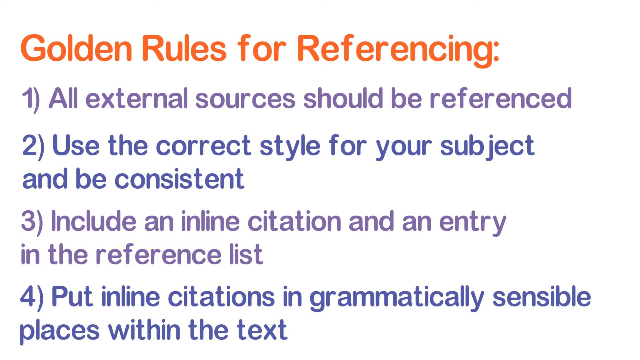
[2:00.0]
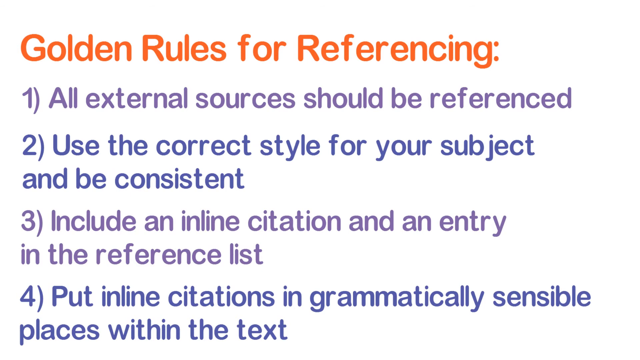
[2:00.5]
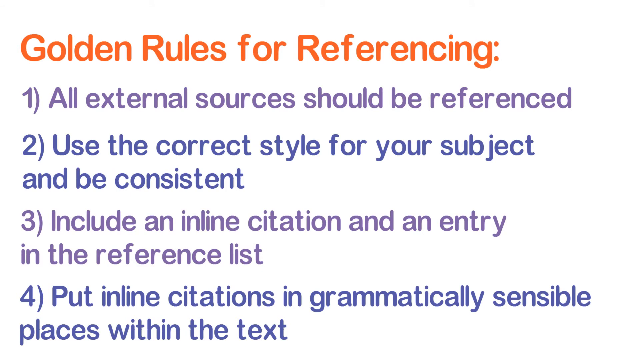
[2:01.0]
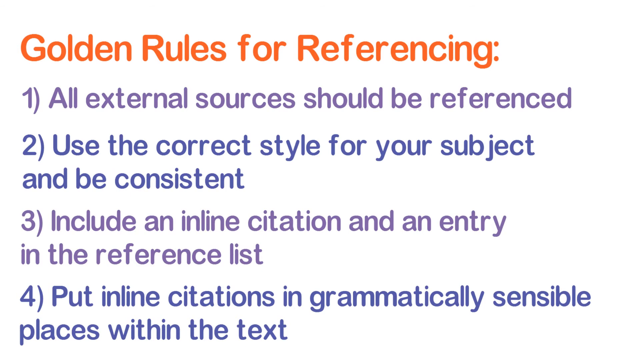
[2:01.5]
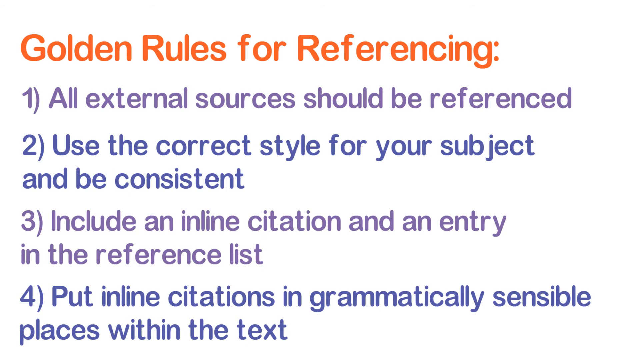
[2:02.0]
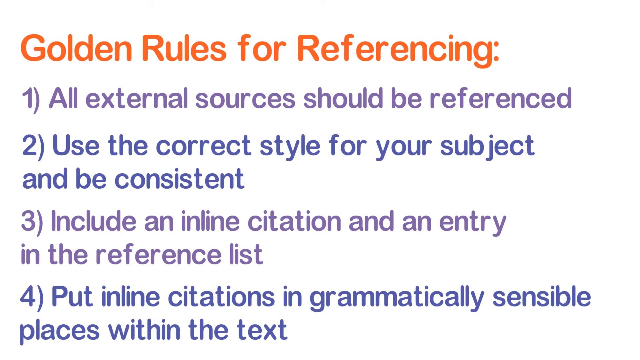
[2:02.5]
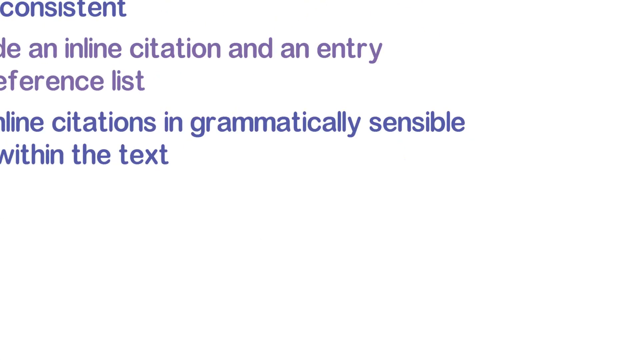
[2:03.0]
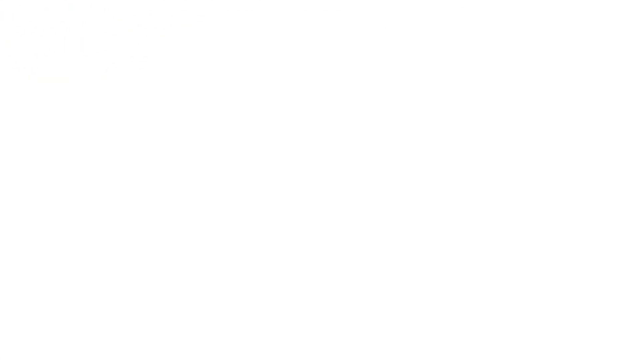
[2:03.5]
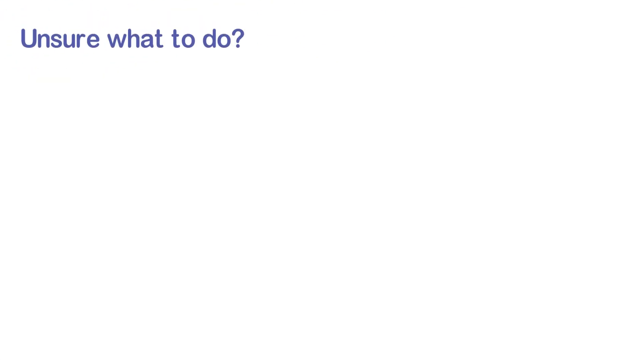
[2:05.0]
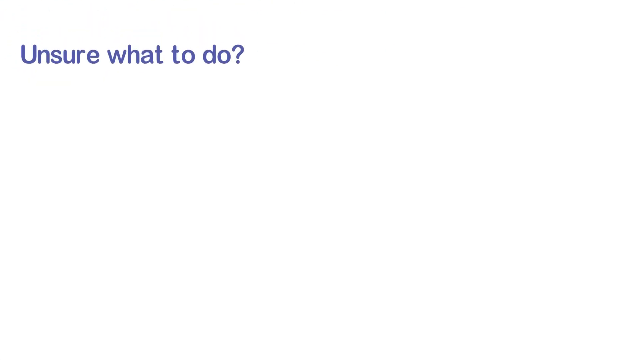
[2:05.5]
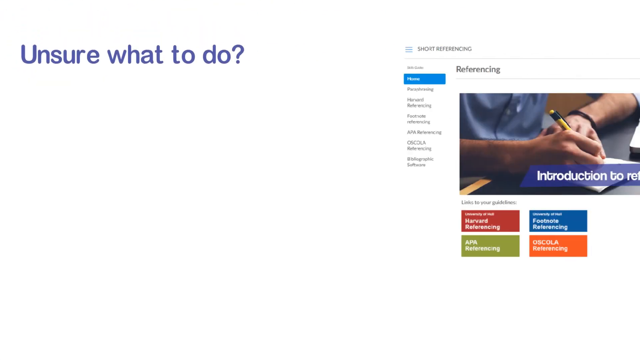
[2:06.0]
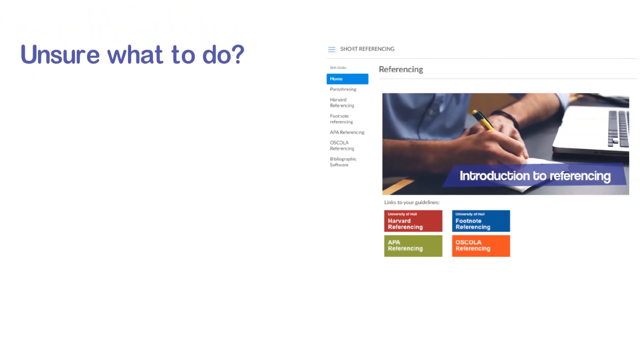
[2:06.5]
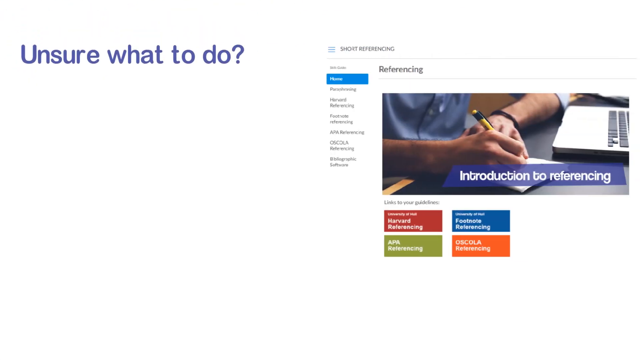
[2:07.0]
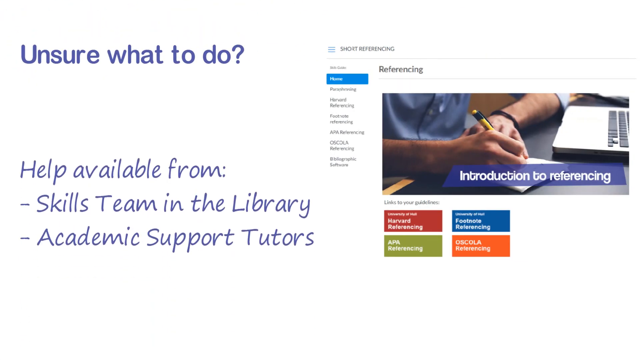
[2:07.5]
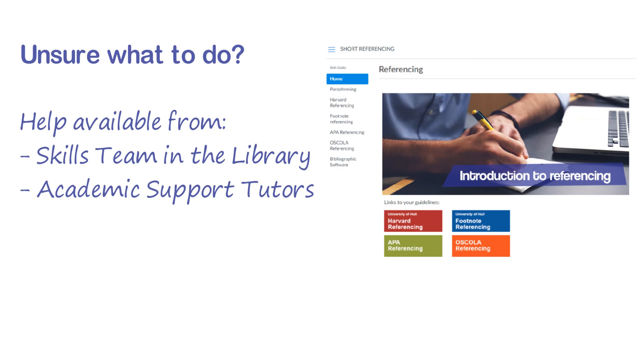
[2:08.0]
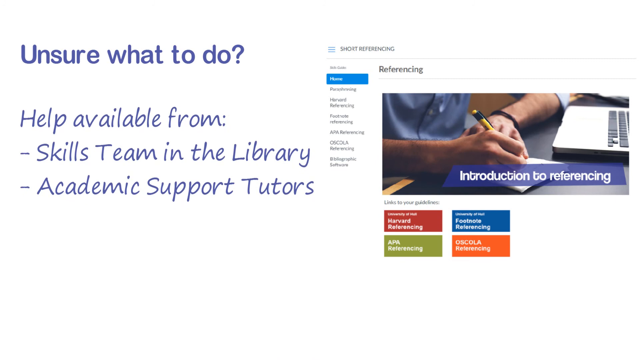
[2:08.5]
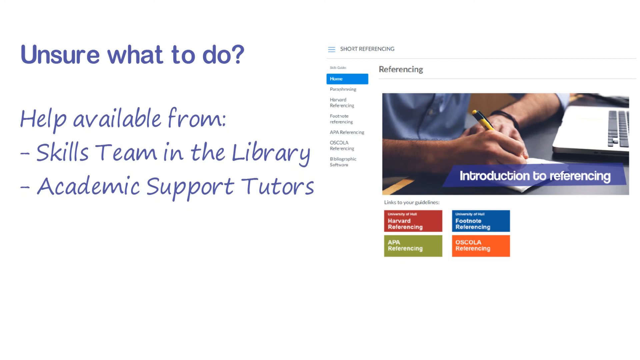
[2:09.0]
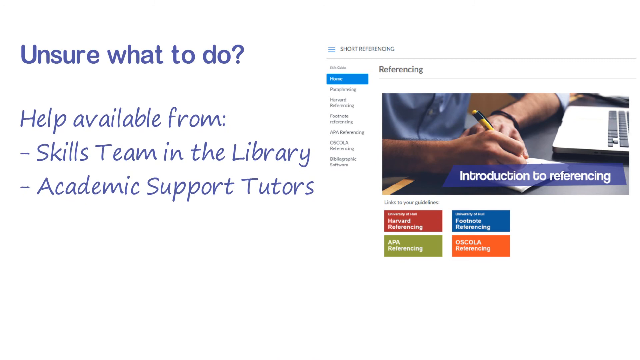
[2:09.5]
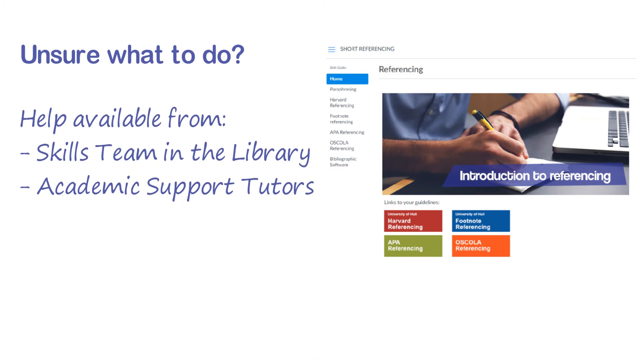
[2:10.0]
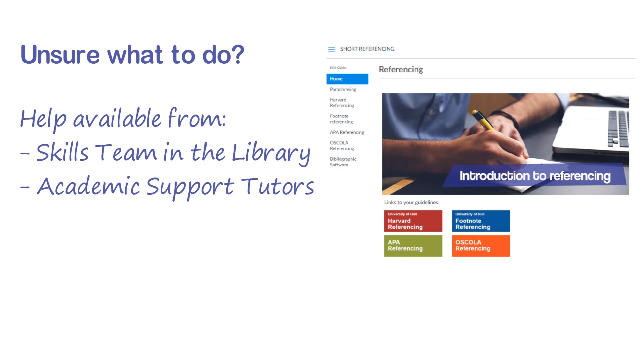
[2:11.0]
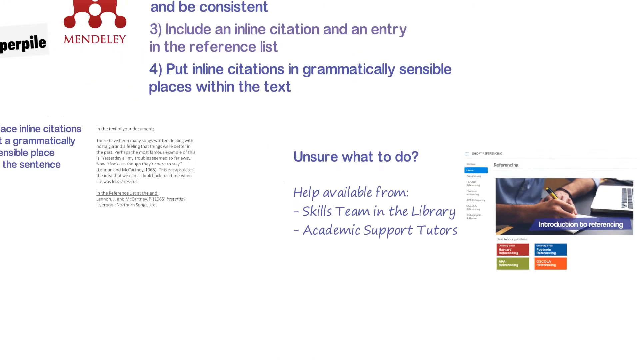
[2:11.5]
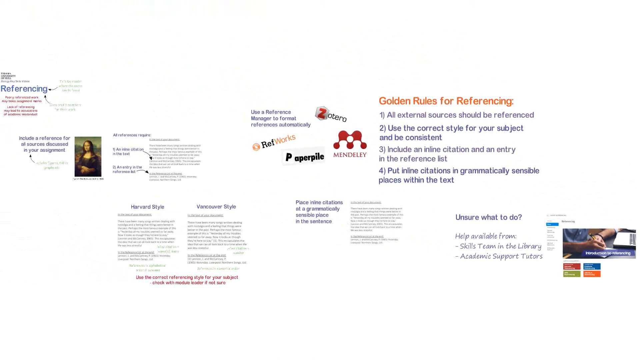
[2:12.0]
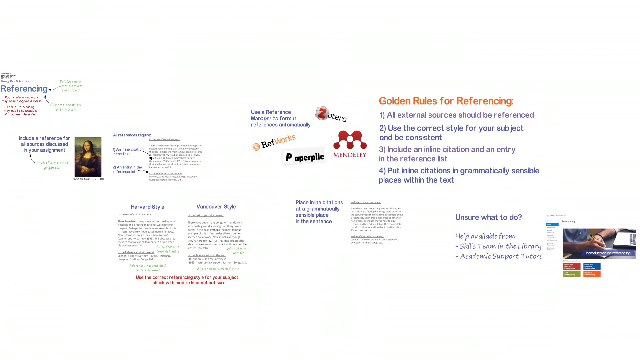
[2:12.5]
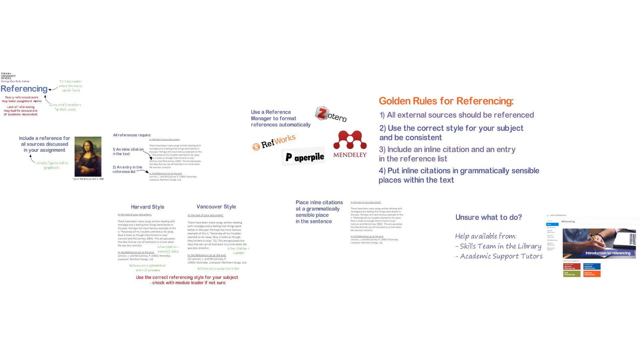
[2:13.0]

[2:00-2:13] The screen is white. At the top, in orange, is "Golden rules for referencing." Underneath, in purple, is number one, "All external sources should be referenced"; under that, in blue, number two, "Use the correct style for your subject and be consistent"; under that, in purple, number three, "Include an inline citation and an entry in the reference list"; and underneath that, in blue, number four, "Put inline citations in grammatically sensible places within the text." All that text then goes away and the screen is white again. In the top left corner, in blue, the text "Unsure what to do" appears, and on the right side of the screen a picture of a web page pops up. At its top is "Referencing," underneath is a picture of a person sitting at a desk, and running along the bottom of the picture is "An introduction to referencing." Then in the bottom left-hand corner of the screen, text appears reading "Help available from skills team in the library academic support tutors."